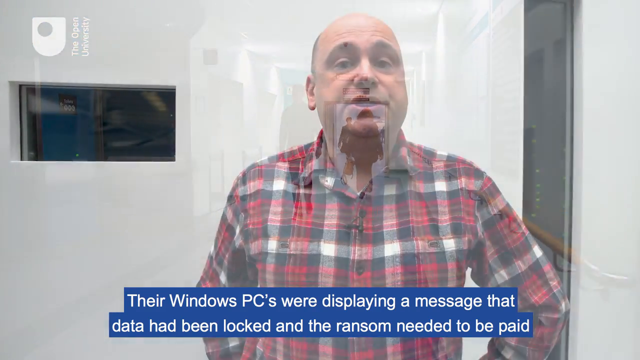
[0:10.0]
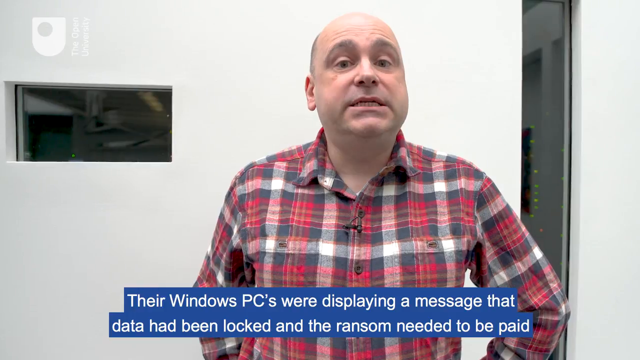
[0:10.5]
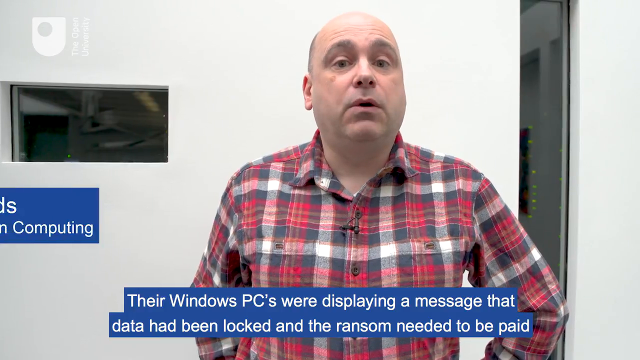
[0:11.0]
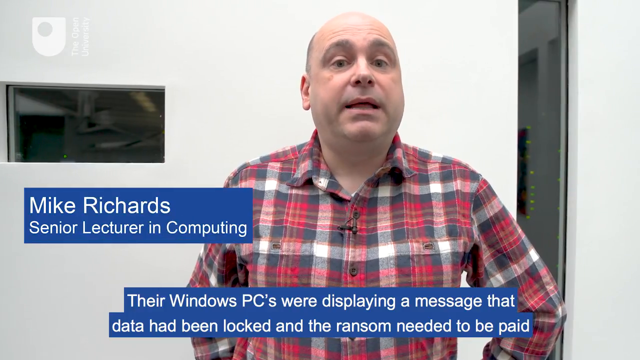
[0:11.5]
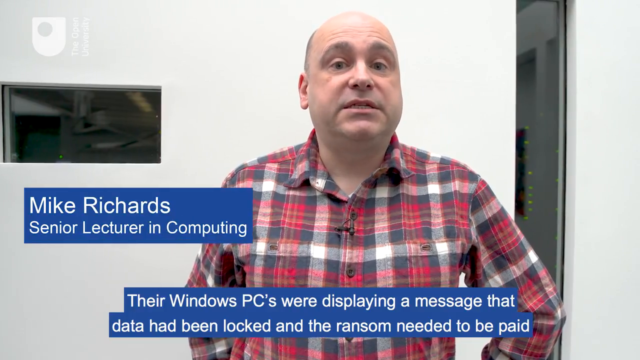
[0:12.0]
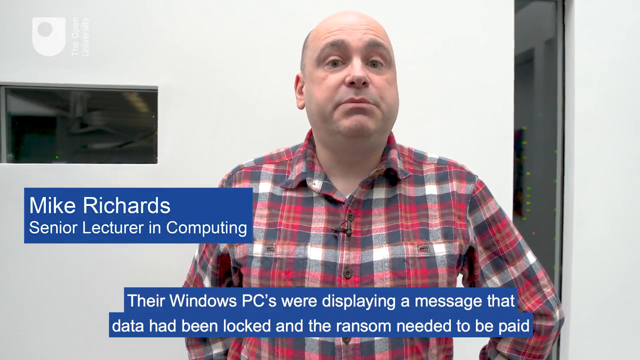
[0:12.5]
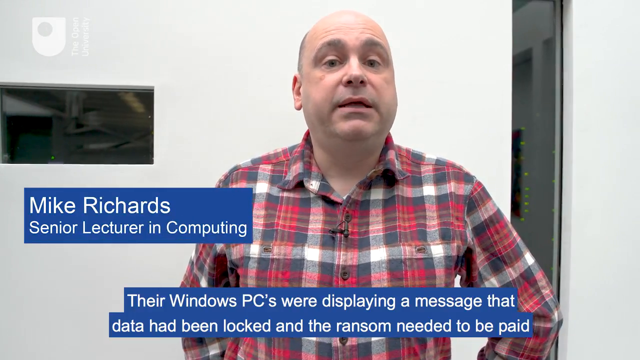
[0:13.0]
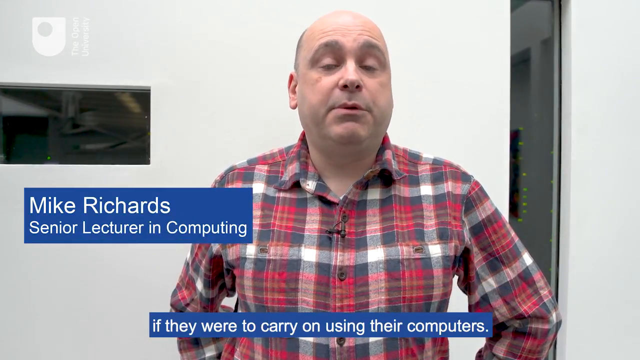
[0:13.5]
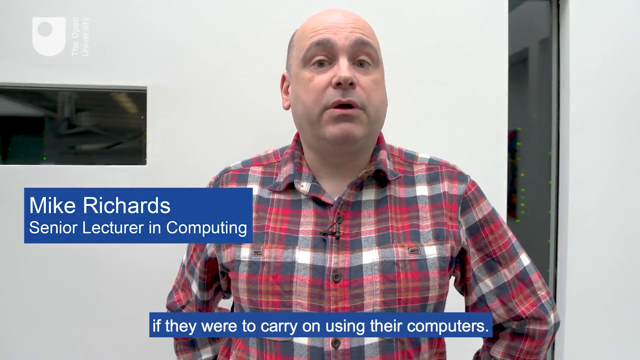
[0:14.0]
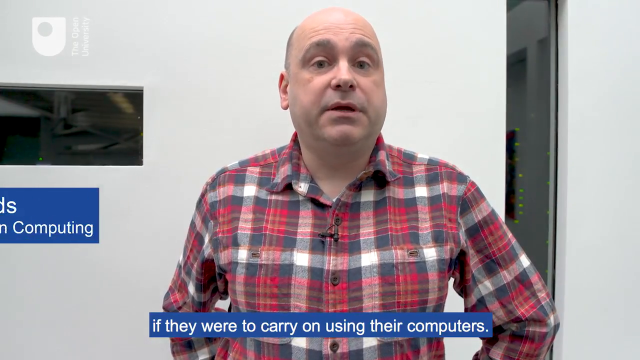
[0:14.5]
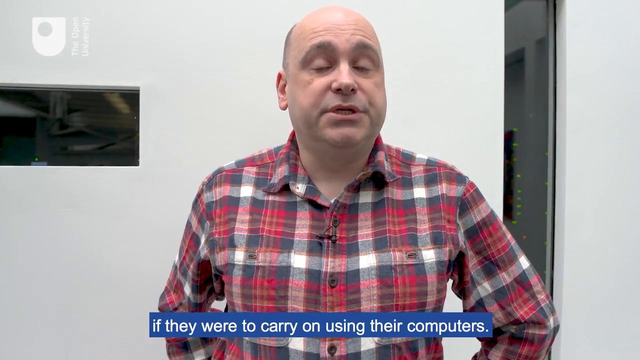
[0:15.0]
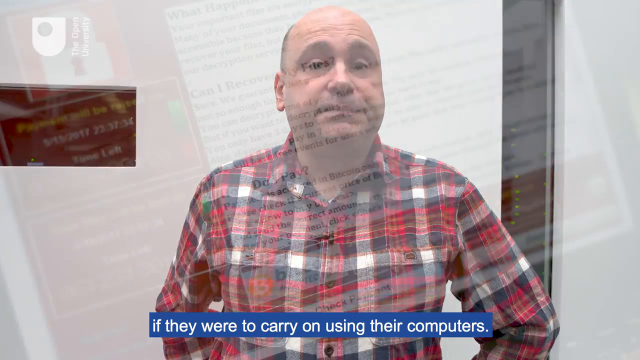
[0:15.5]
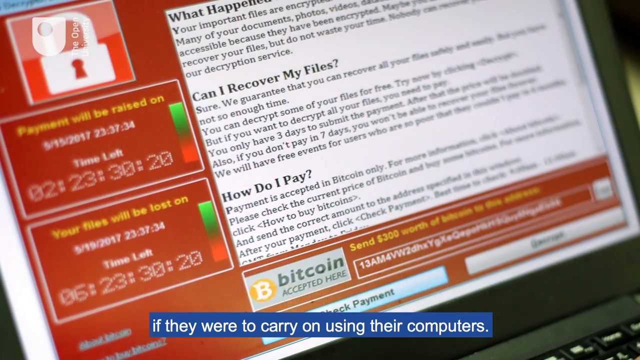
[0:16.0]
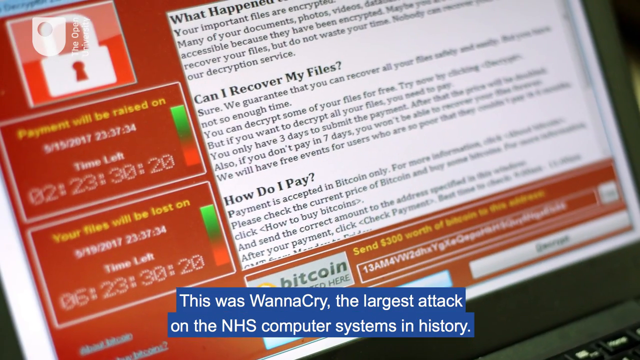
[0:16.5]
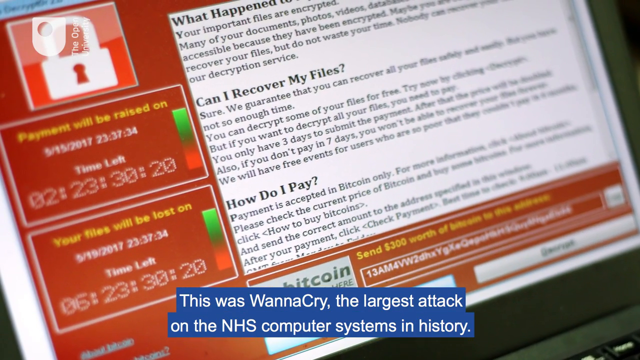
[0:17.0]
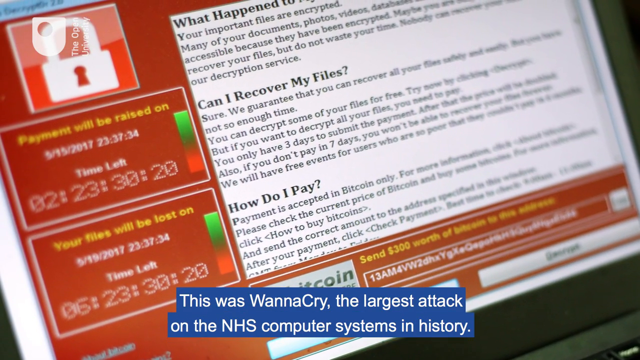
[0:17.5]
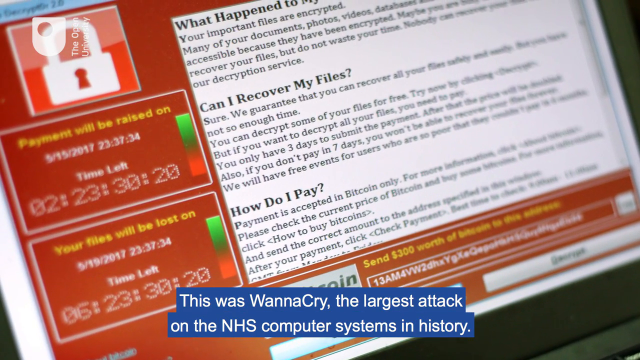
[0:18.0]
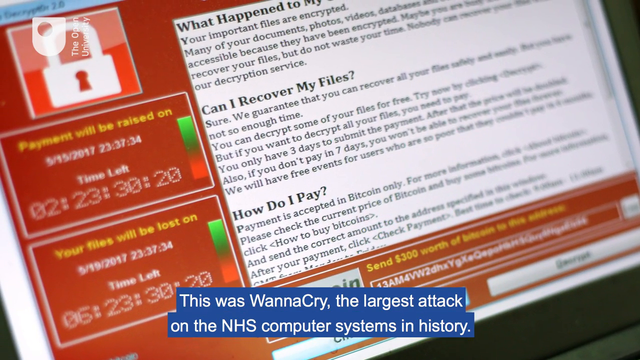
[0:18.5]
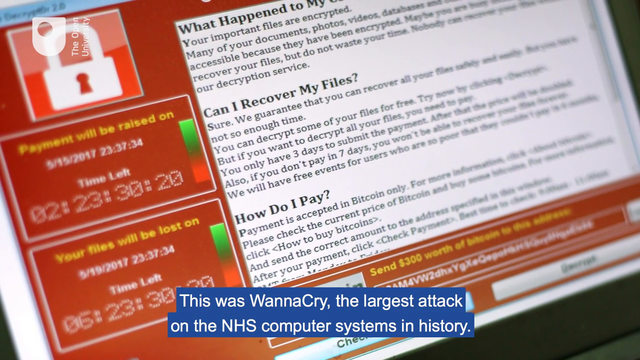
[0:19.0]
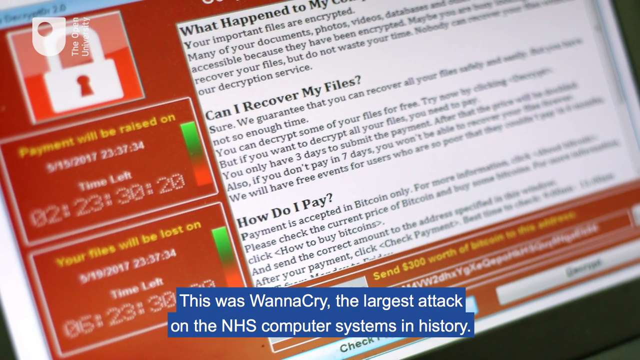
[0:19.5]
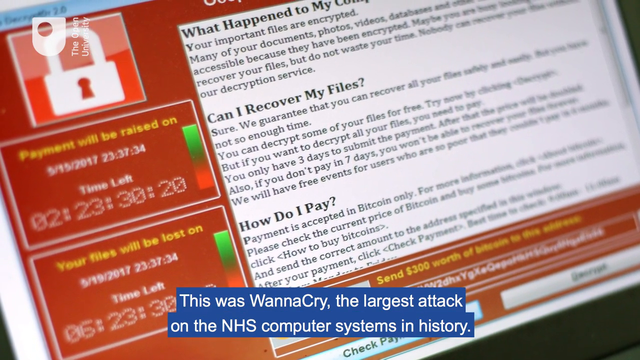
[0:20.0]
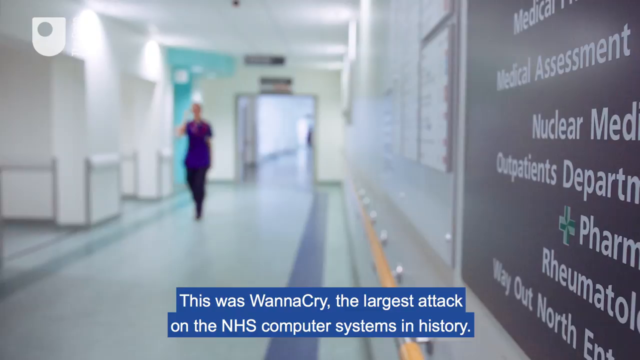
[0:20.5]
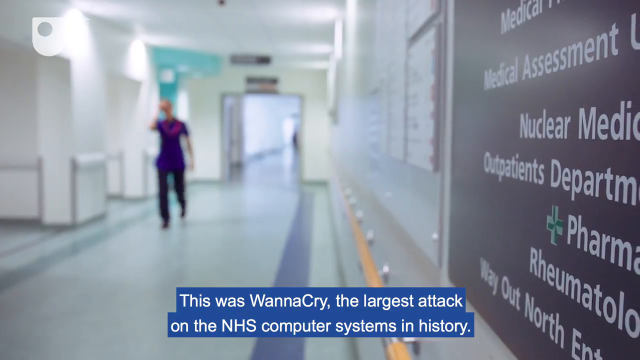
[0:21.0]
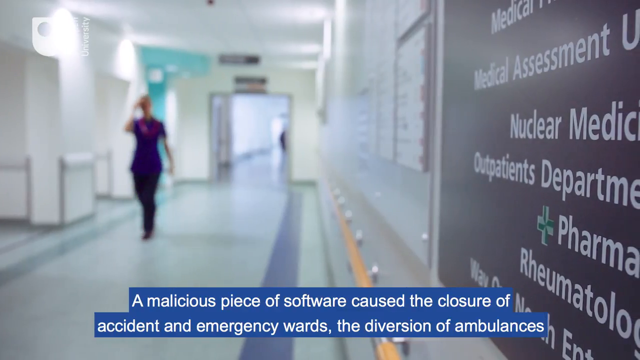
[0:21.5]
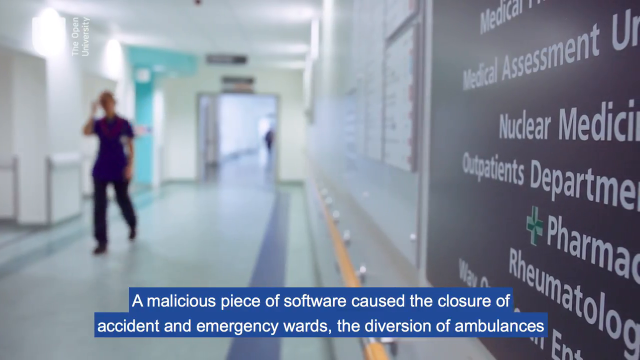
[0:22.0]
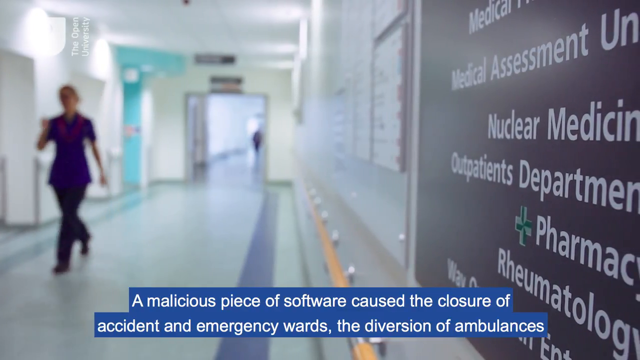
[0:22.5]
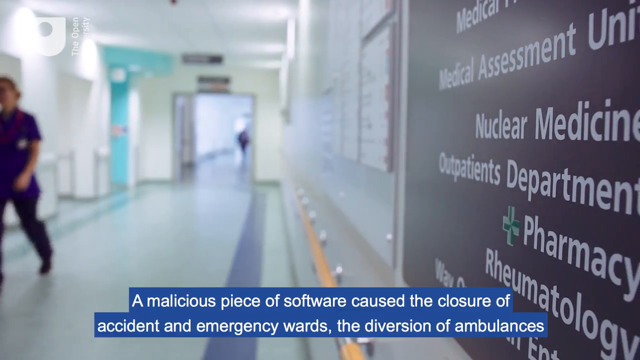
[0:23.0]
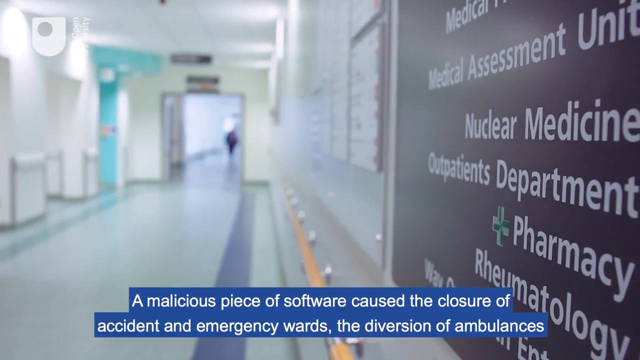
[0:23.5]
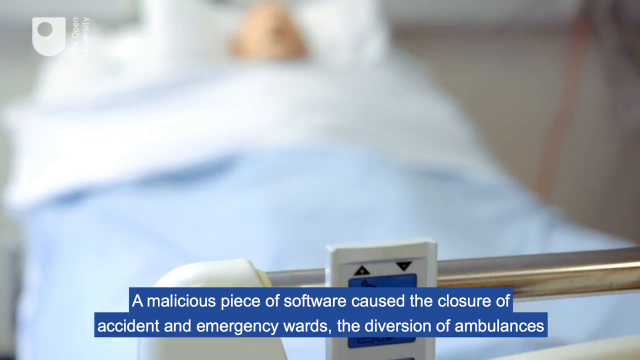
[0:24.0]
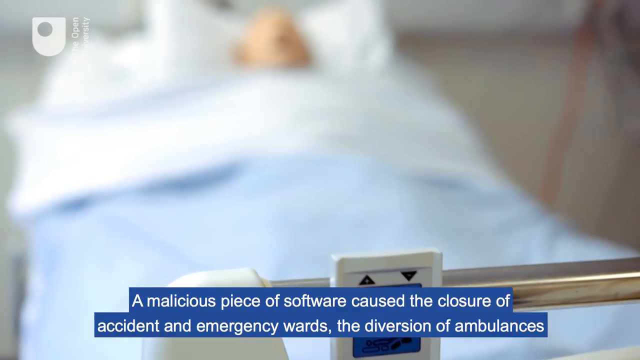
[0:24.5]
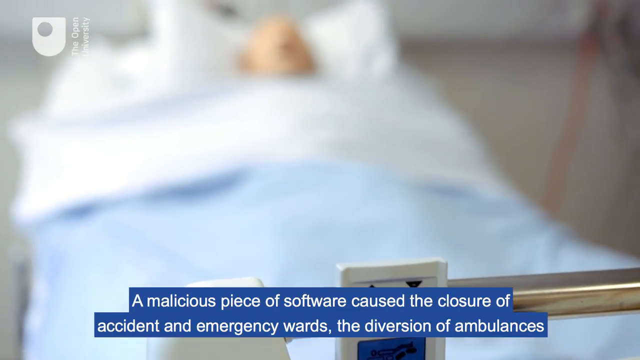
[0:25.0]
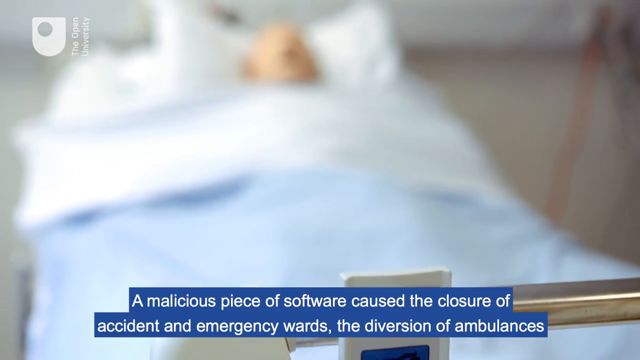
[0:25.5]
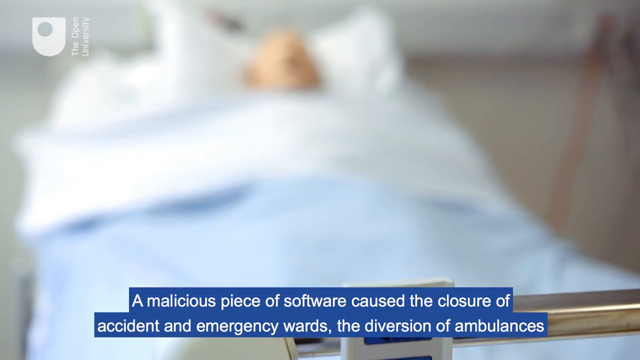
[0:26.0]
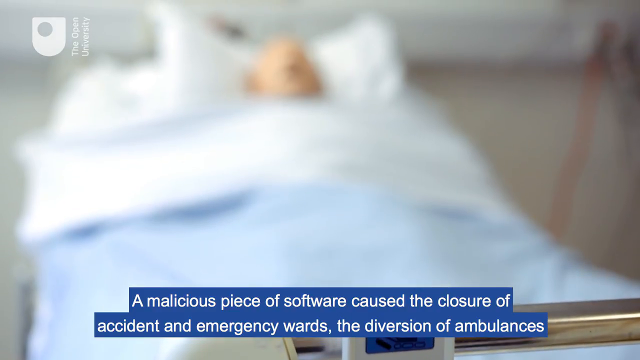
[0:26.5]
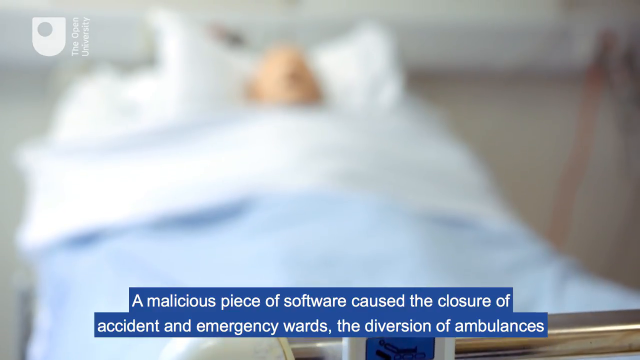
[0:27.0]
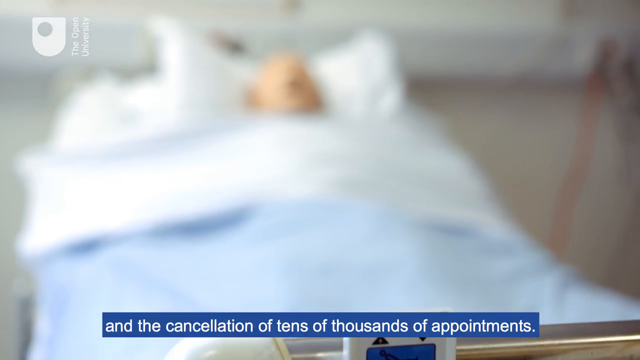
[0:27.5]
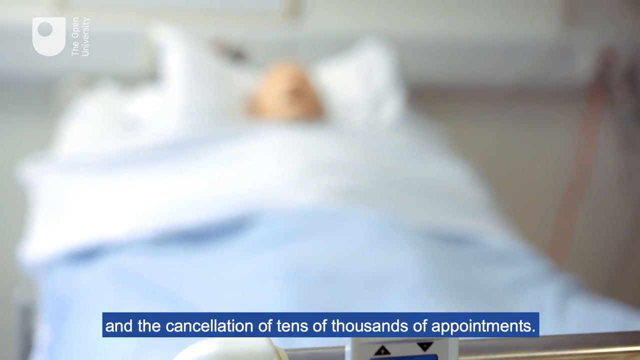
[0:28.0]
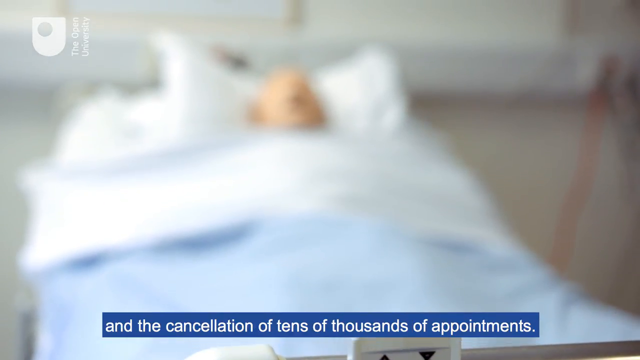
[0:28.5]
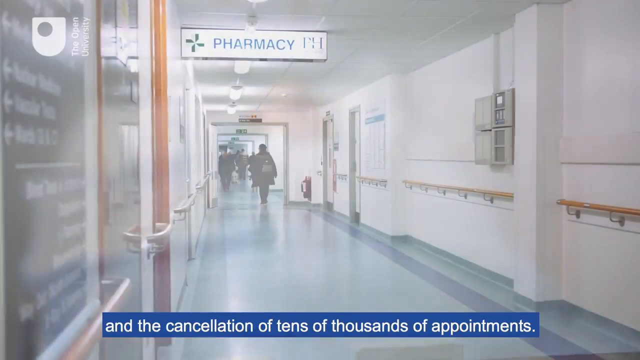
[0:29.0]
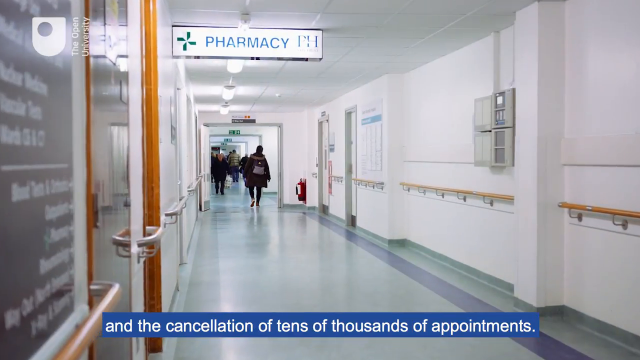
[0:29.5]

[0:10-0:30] A man in a red, white, and dark blue flannel-pattern shirt talks to the camera. A subtitle appears at the bottom of the screen reading "their Windows PCs were displaying a message that Data had been locked and the ransom needed to be paid," and another infographic to the side reads "Mike Richards senior lecturer in computing." Mike Richards appears to be explaining the situation as he continues to talk to the camera. Then what appears to be the ransomware screen is shown, with a number of different subsections accepting things like Bitcoin and direct transfers, and an infographic at the bottom left reads "This is WannaCry the largest attack on the NHS computer systems in history." The shot zooms in on the ransomware before cutting back to the hospital scene, including a man sitting in a bed underneath a blanket. A subtitle at the bottom of the screen reads "A malicious piece of software caused the closure of accident and emergency wards, the diversion of ambulances, and the cancellation of tens of thousands of appointments."